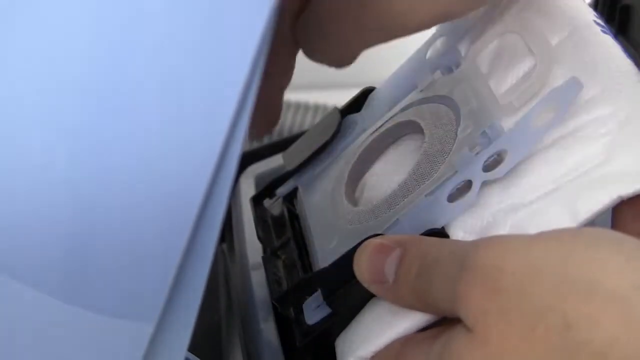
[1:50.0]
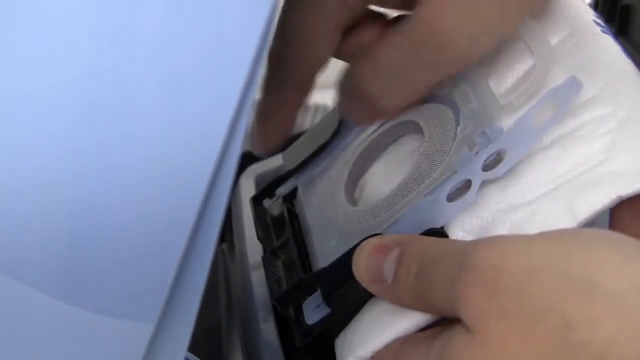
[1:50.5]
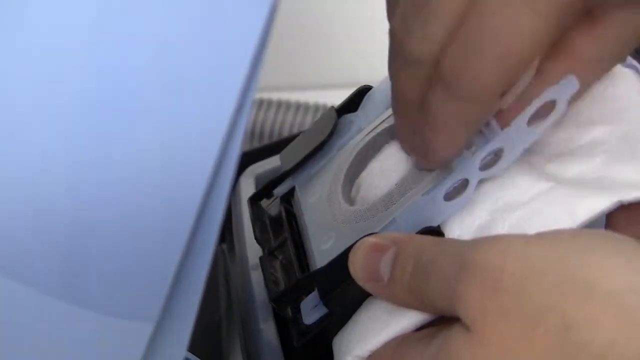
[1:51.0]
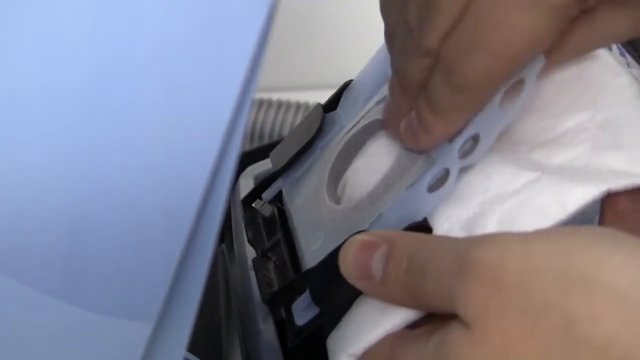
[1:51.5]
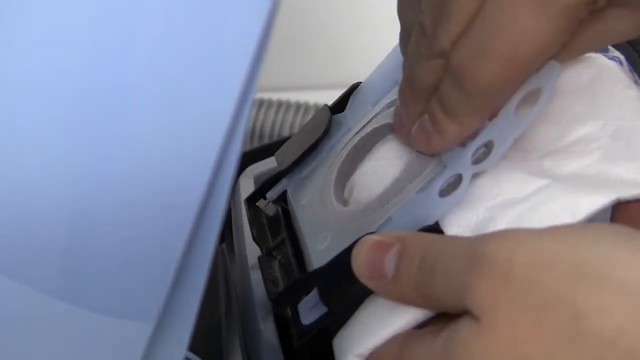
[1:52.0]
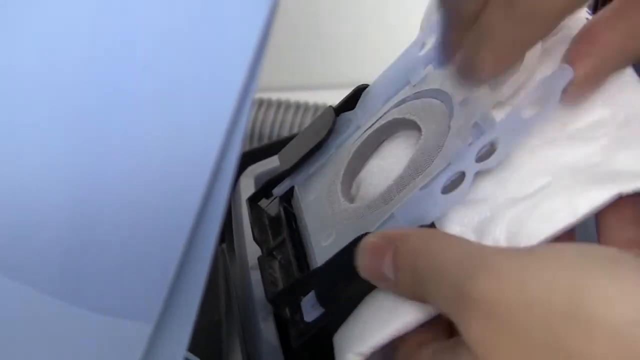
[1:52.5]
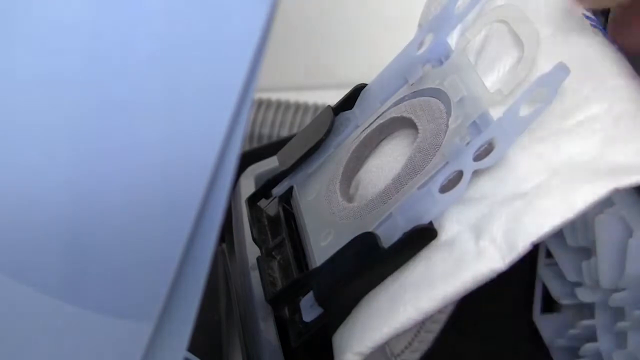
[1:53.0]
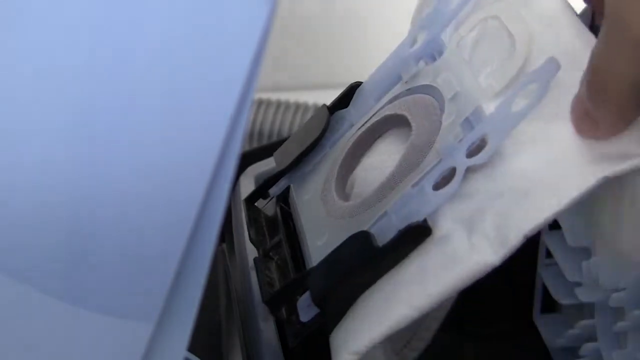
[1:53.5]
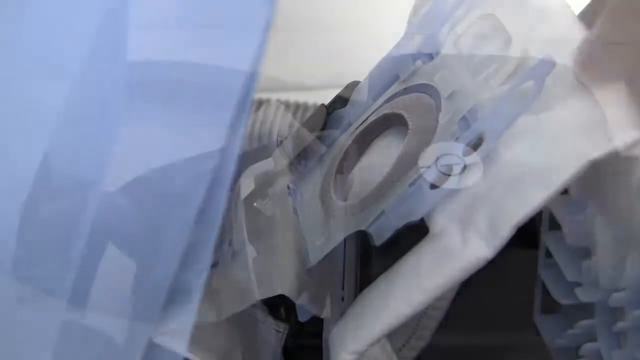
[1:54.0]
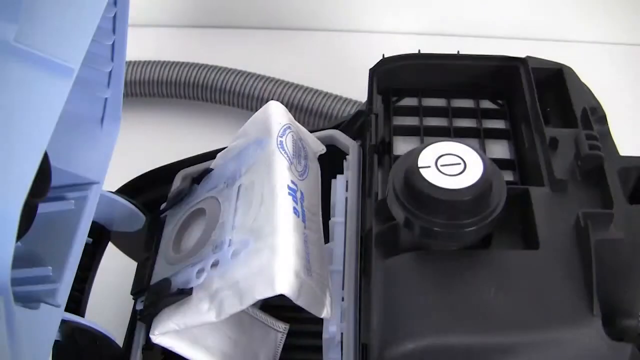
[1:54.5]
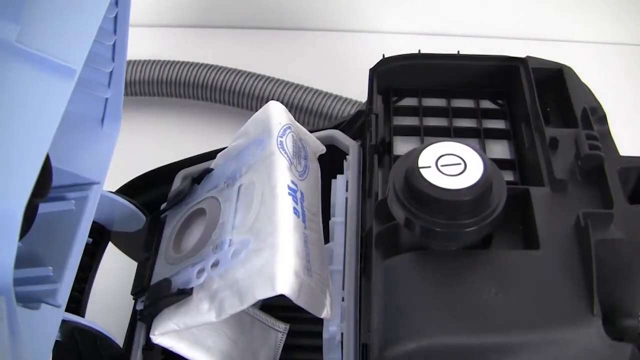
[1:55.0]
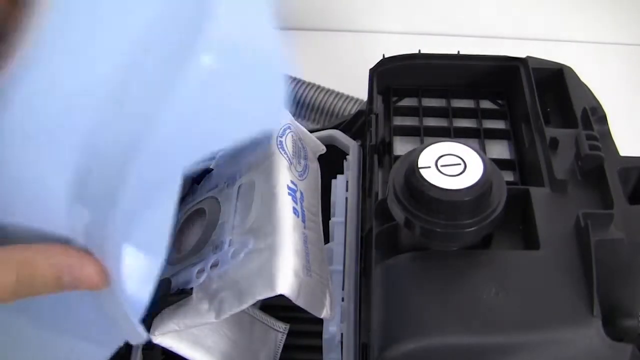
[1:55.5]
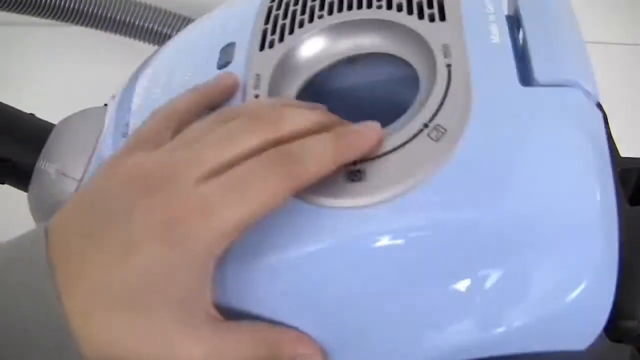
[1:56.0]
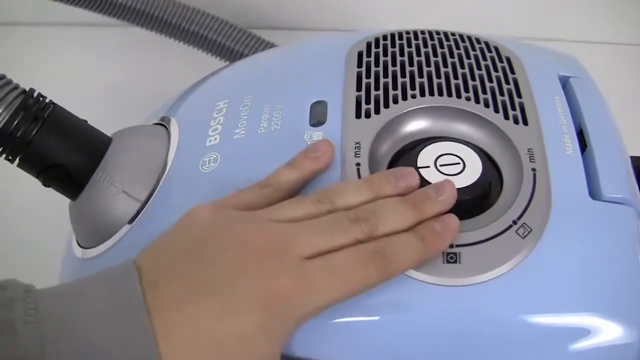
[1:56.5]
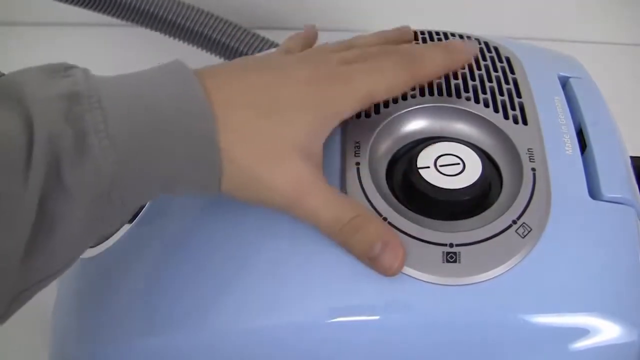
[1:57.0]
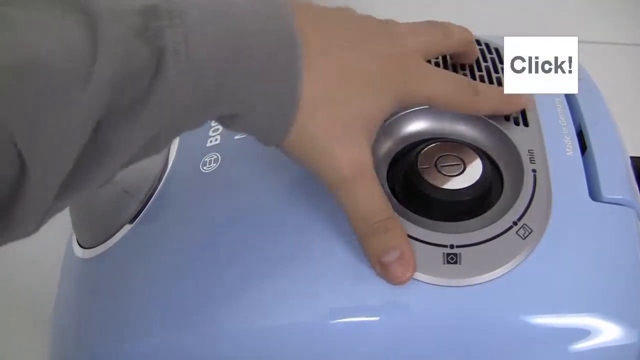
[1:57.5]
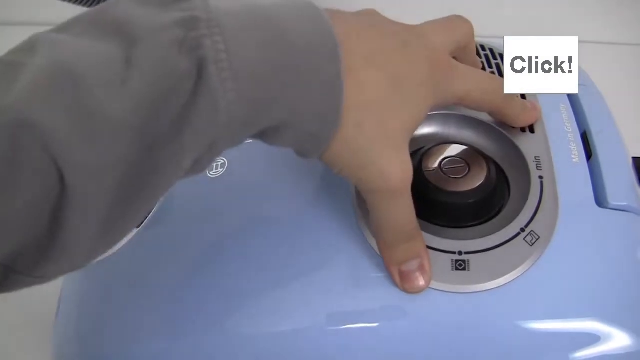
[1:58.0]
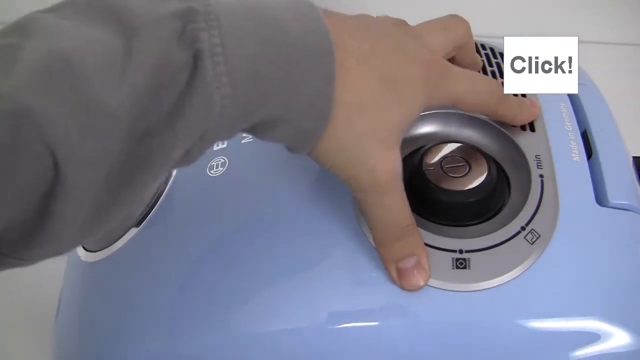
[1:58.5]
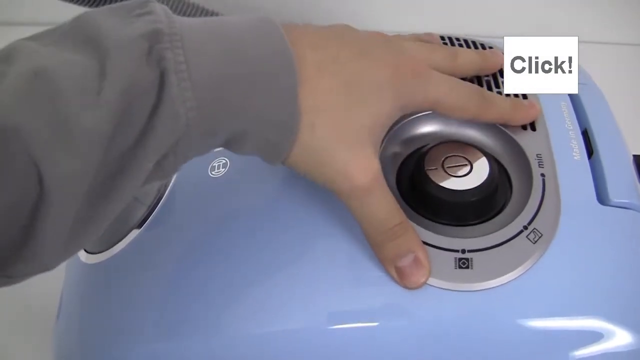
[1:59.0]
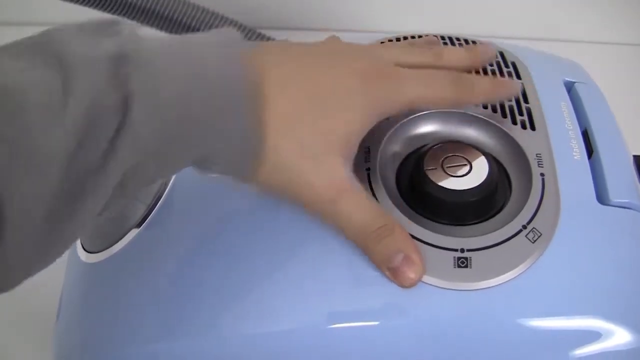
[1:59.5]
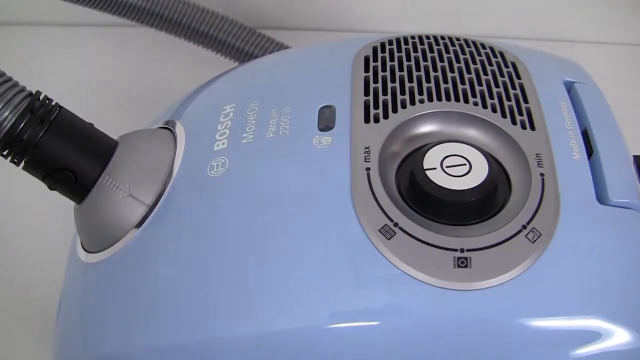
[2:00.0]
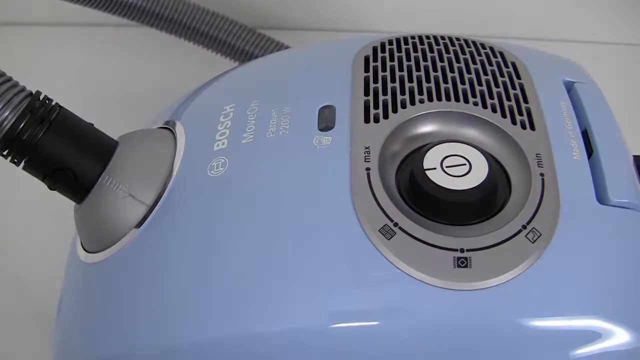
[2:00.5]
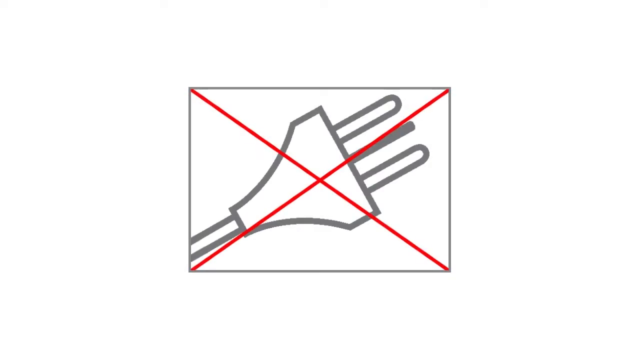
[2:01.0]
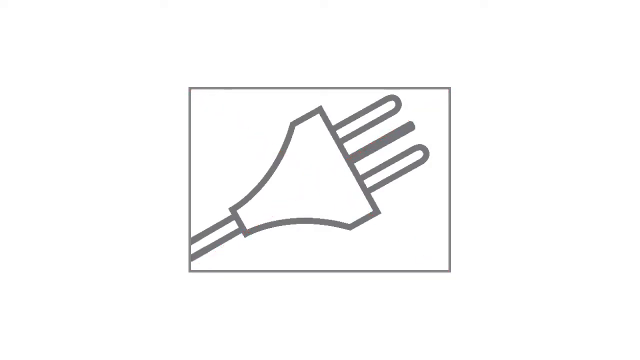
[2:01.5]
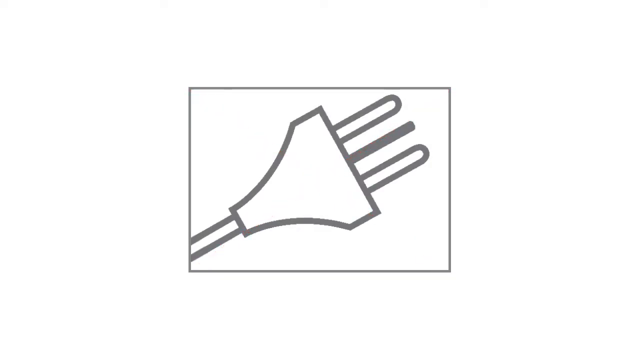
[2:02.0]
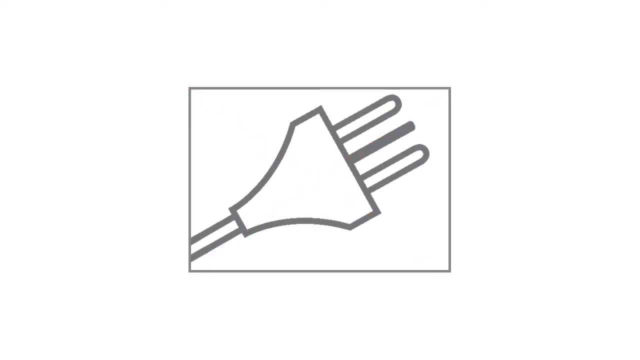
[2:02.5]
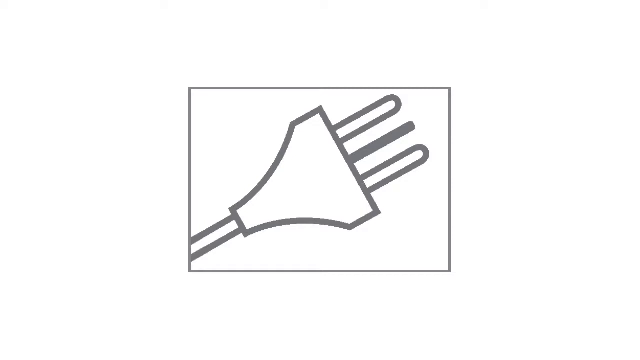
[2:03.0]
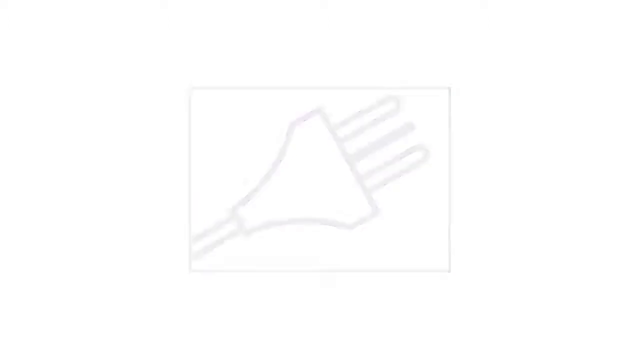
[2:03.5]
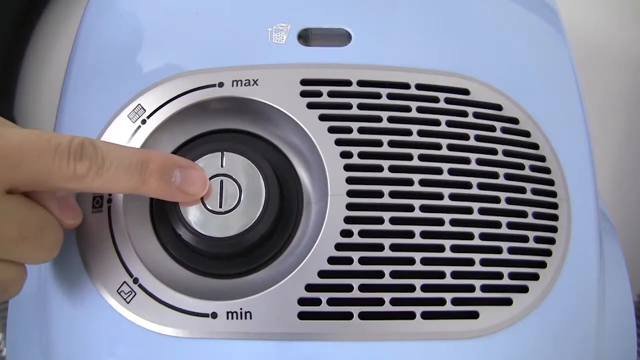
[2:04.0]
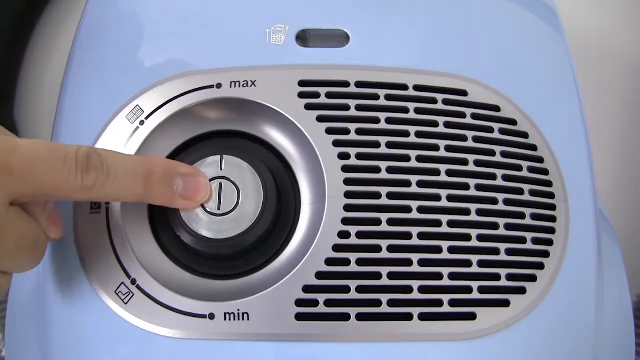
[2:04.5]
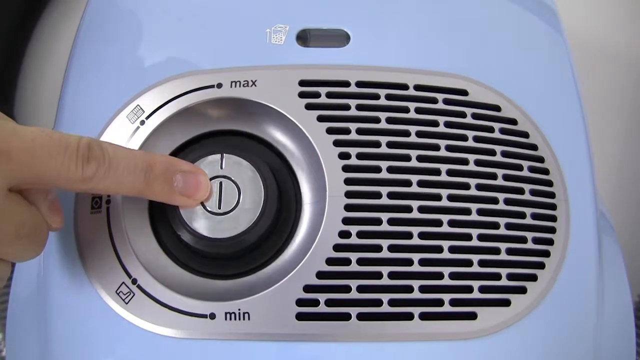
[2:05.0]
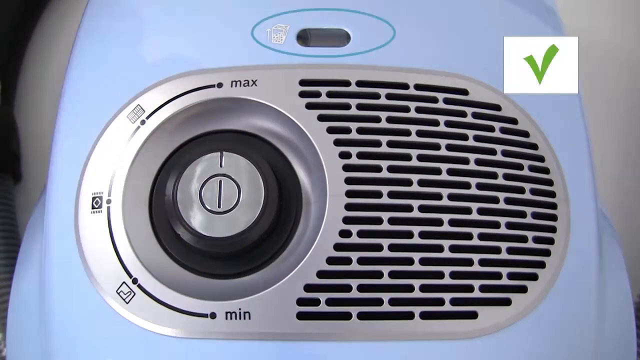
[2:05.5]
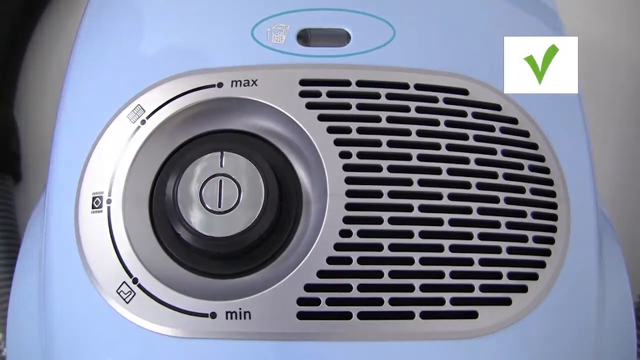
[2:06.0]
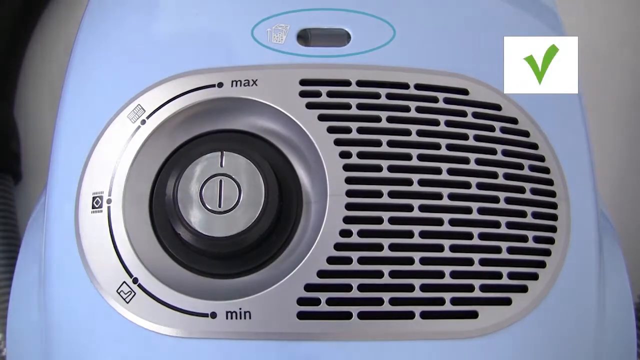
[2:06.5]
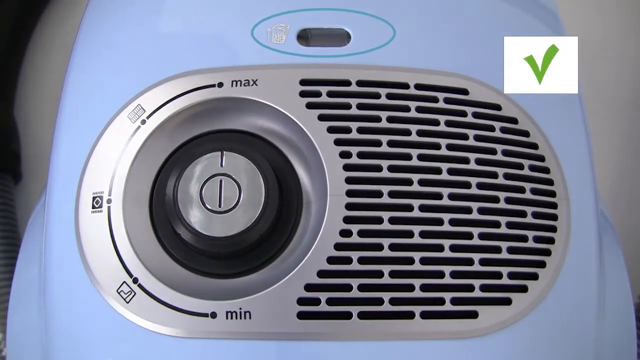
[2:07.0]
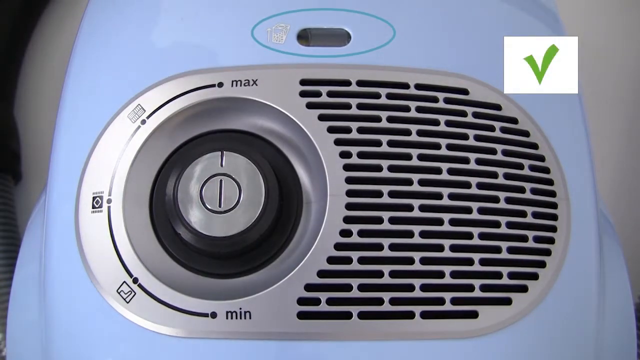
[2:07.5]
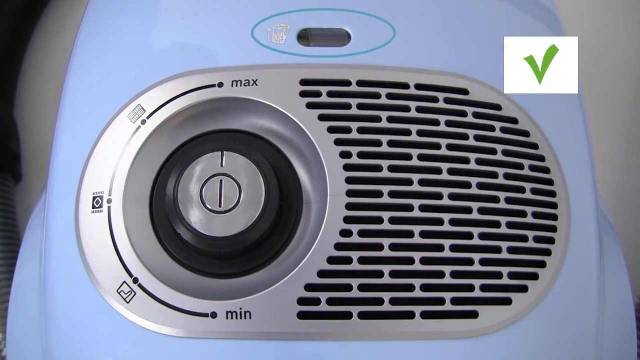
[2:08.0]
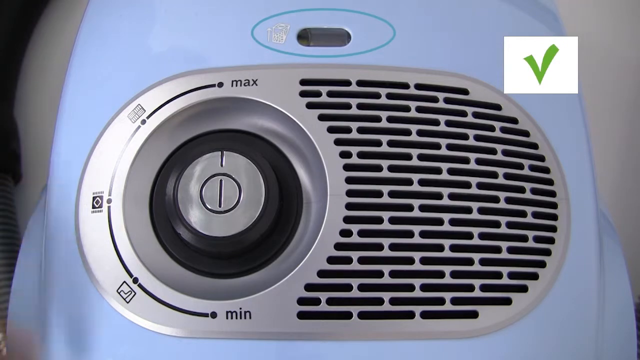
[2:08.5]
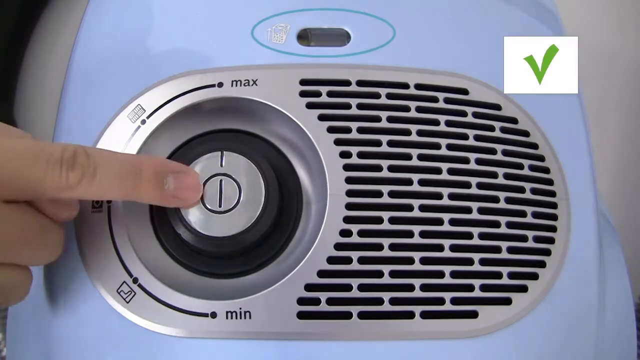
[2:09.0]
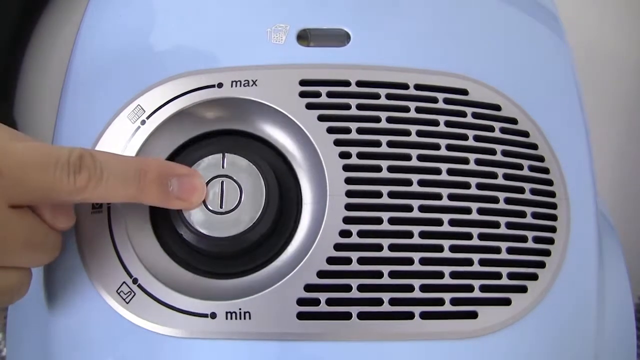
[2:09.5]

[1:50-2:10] A vacuum bag is placed inside a slot connected to the vacuum, and the hand makes sure it stays put. The scene transitions to a hand closing the light blue cover of the vacuum, which snaps downwards. The hand rests on top of the cover, and the word "click" appears in gray within a white rectangular frame in the top right of the screen. The hand tries to make sure the vacuum has been properly secured. A transition leads to an image of a plug with a red X over it, all within a rectangular frame on a white background. The scene fades out and the vacuum is shown once again; the hand presses the on button, and a green checkmark appears inside a white rectangular box in the top right corner.